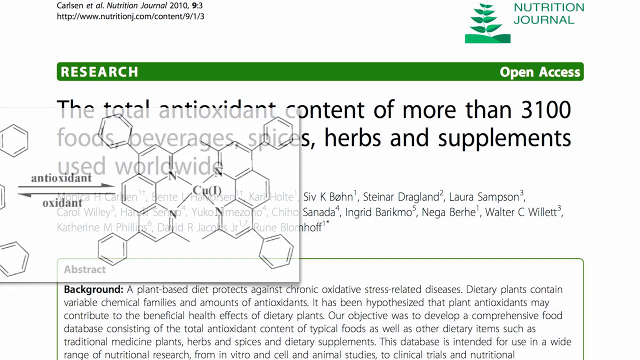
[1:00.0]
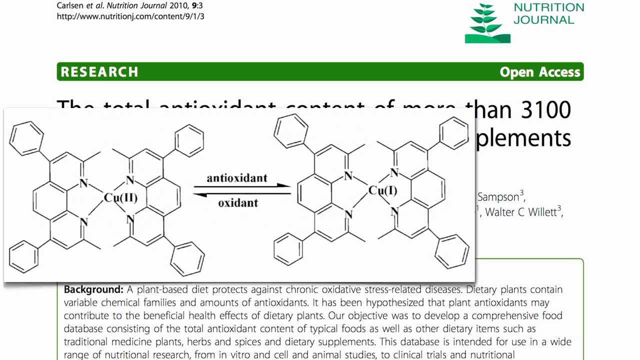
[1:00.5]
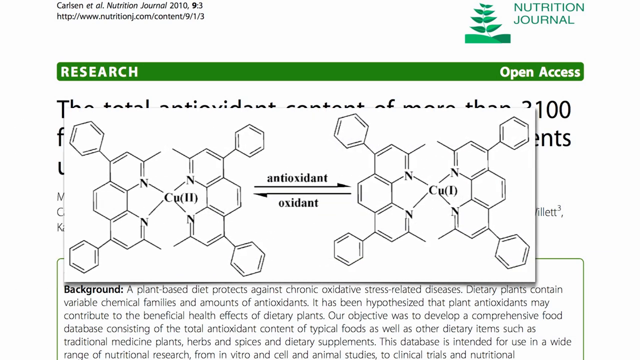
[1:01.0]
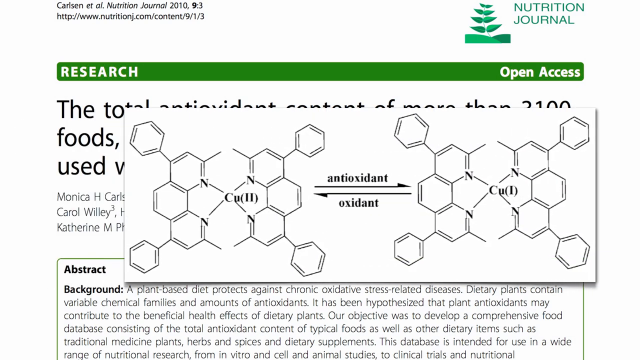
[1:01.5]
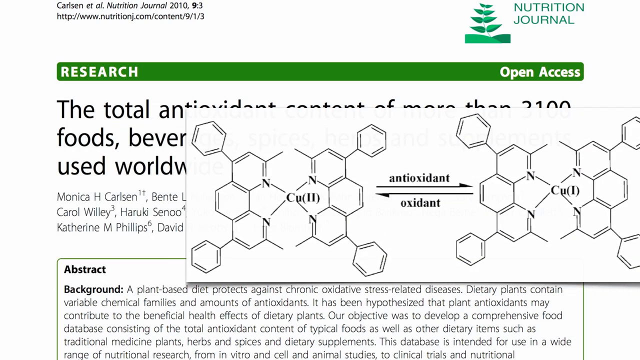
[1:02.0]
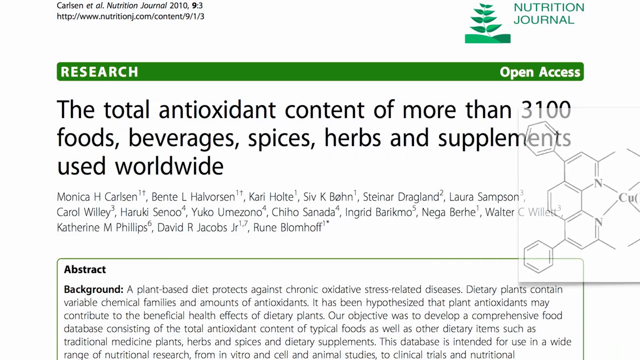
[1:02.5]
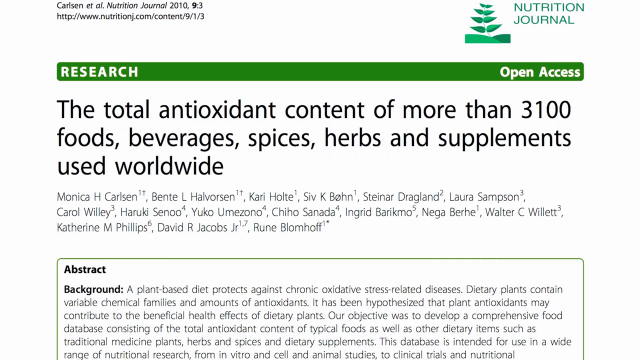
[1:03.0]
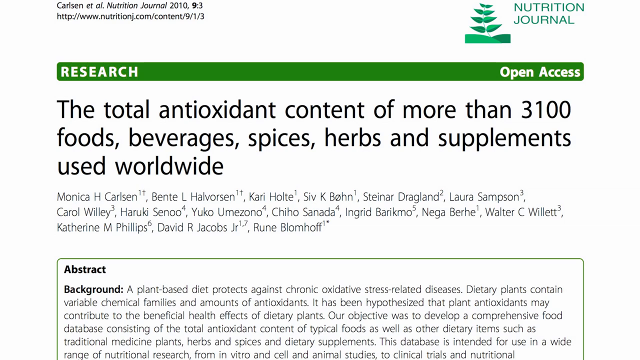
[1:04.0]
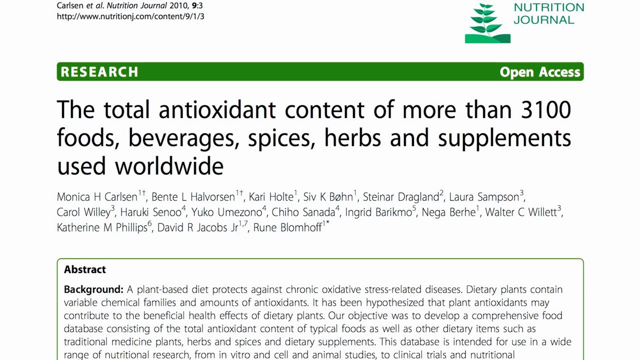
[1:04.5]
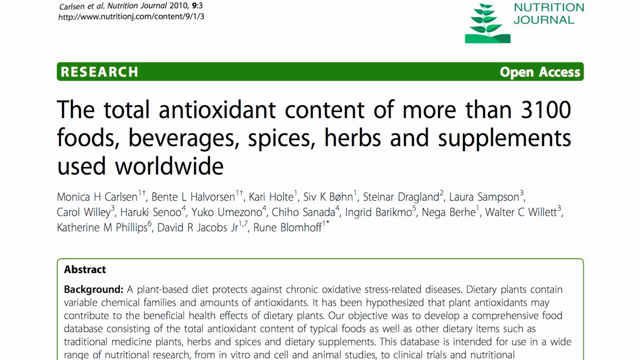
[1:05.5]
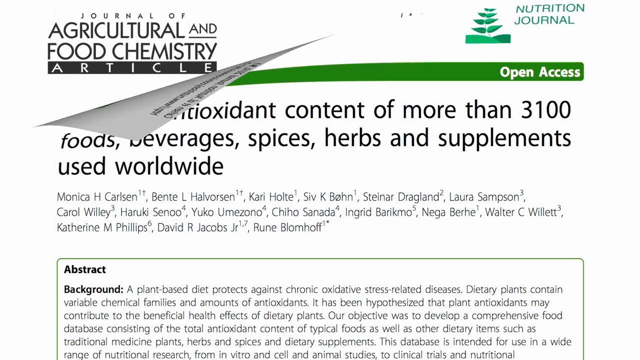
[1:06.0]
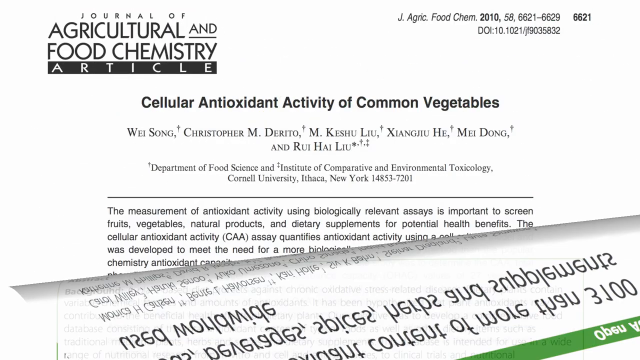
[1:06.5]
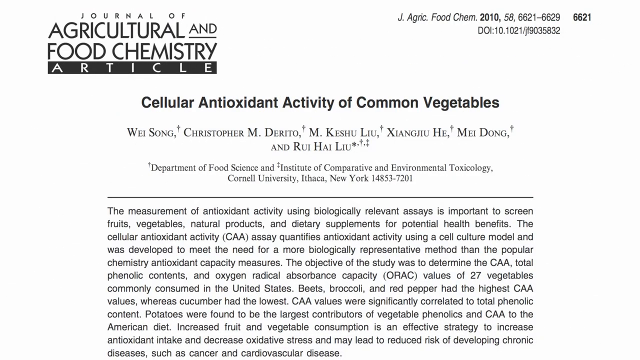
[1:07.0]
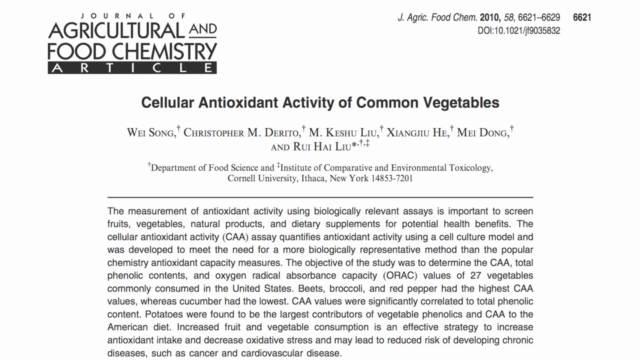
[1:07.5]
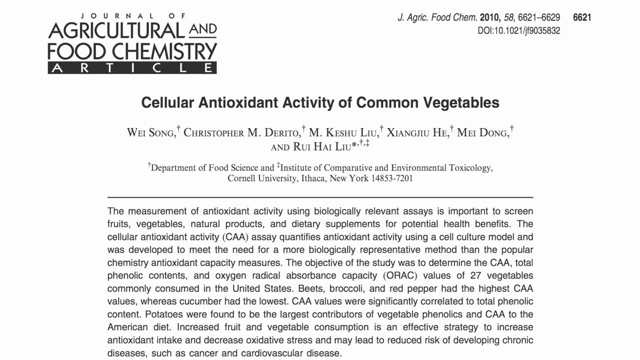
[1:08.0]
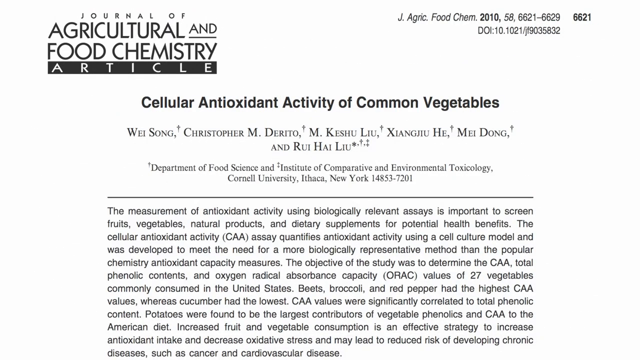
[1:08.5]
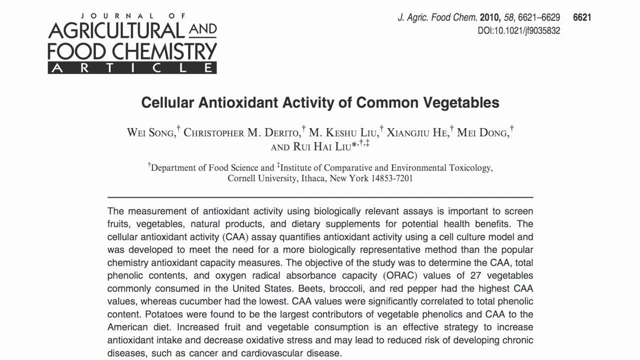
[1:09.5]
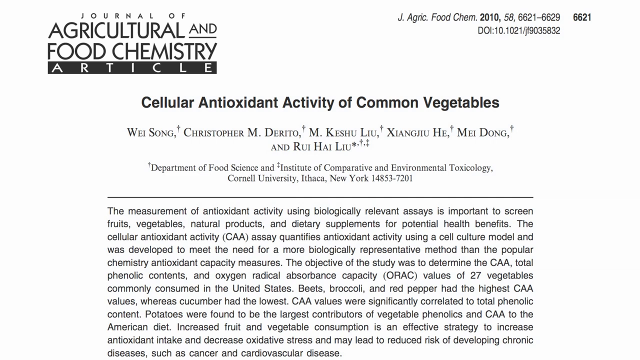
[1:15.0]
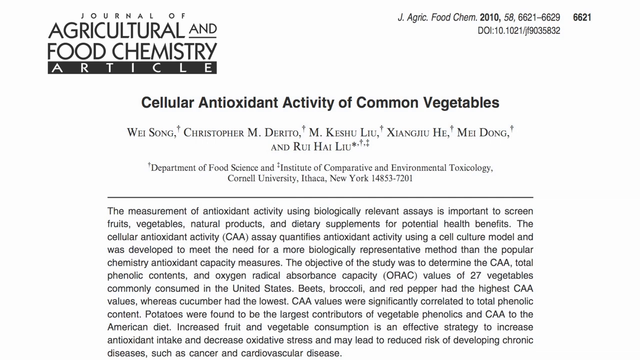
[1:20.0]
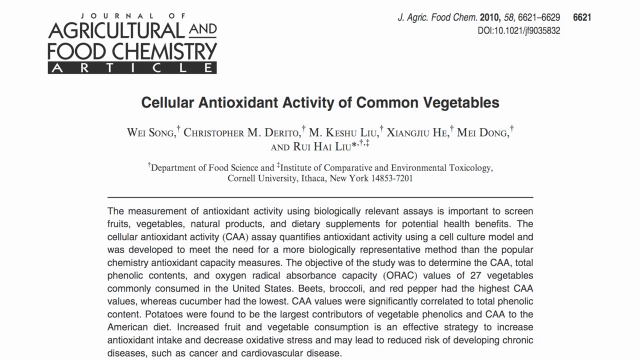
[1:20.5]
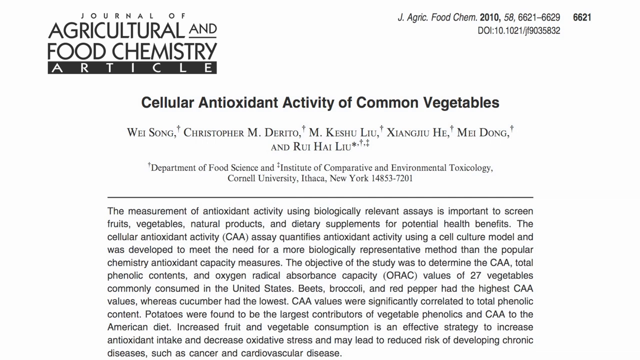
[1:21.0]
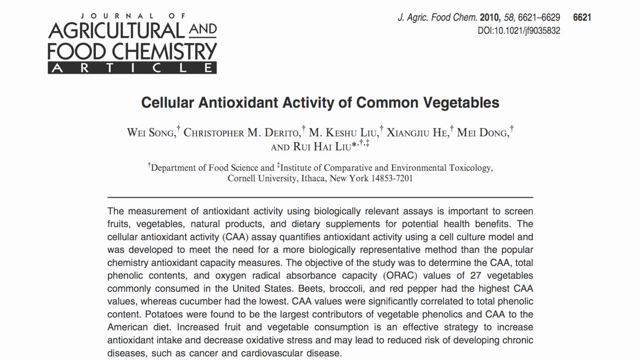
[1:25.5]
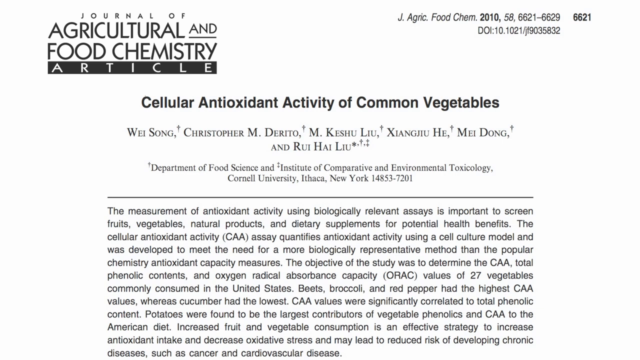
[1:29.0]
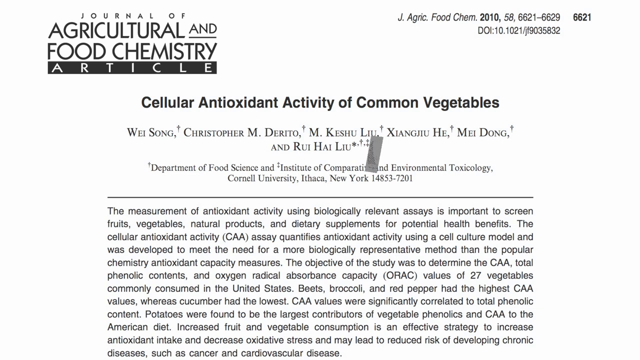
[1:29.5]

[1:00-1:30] A research article from Open Access, the nutrition journal, is shown. Almost honeycomb-shaped objects come across the screen, labeled with some N's and some "CU(11)"s. Between them, "antioxidant" appears with an arrow pointing right and "antioxidant" with an arrow pointing left. The objects come in from the left side of the screen and disappear to the right. The nutritional document peels away down to the bottom. An agriculture and food chemistry article on cellular antioxidant activity of common vegetables appears; at the very top it says who wrote the article, followed by a brief recap of the research. Only the top portion of the article is visible, and the bottom portion is cut off.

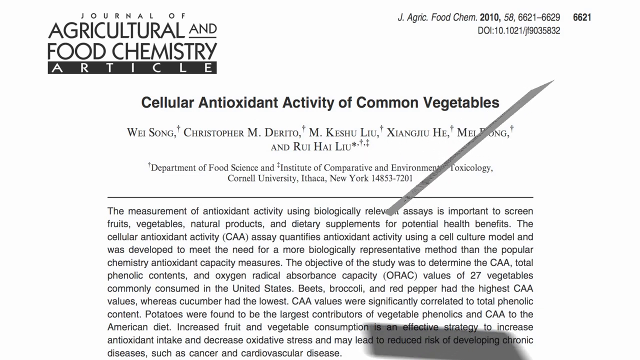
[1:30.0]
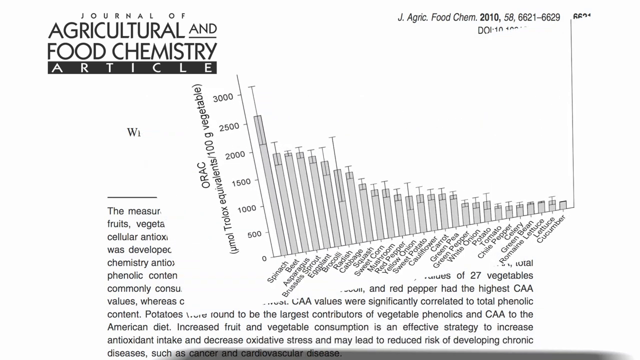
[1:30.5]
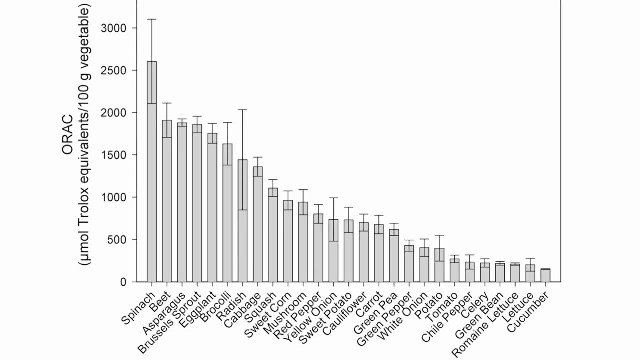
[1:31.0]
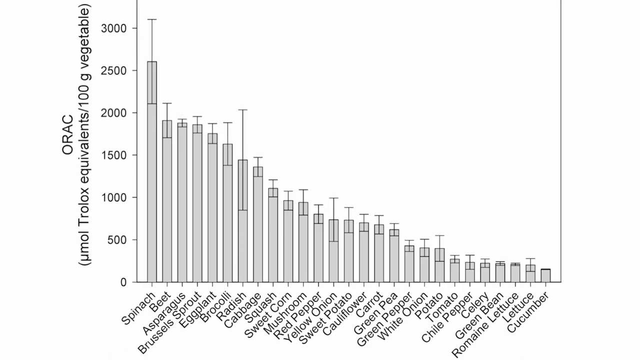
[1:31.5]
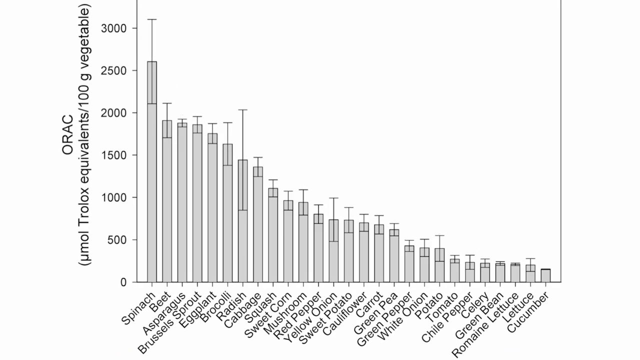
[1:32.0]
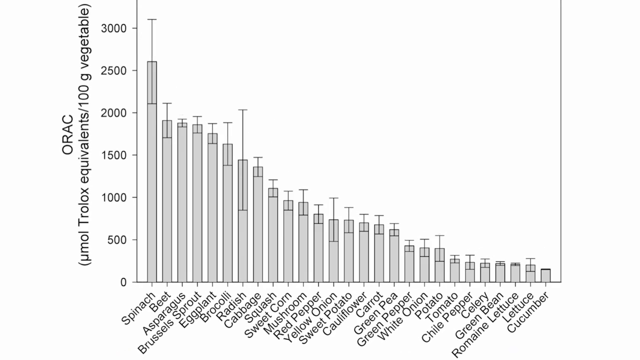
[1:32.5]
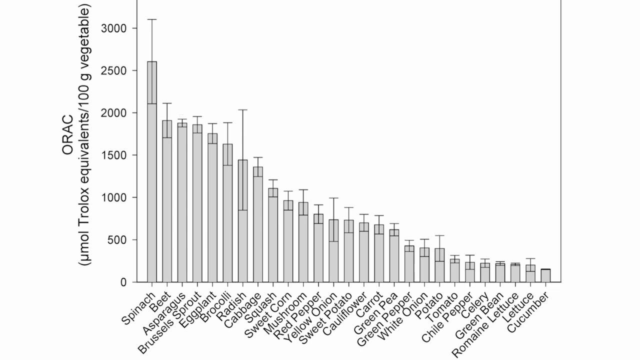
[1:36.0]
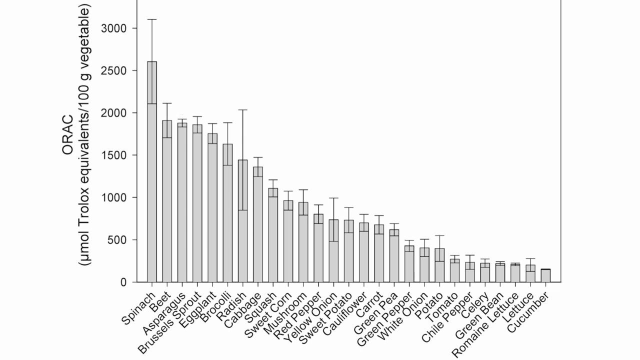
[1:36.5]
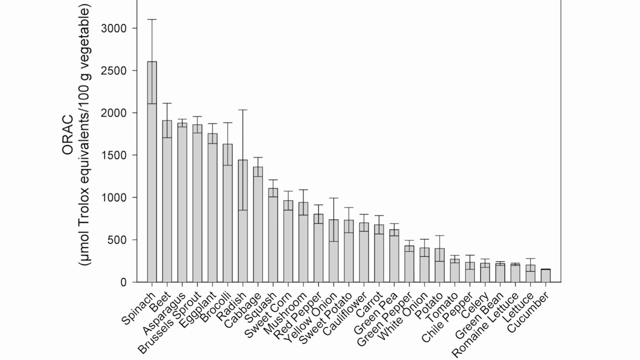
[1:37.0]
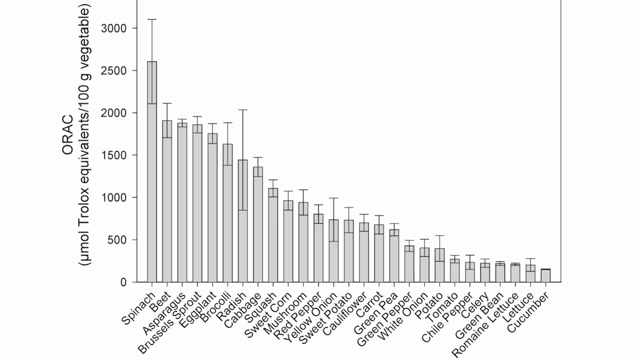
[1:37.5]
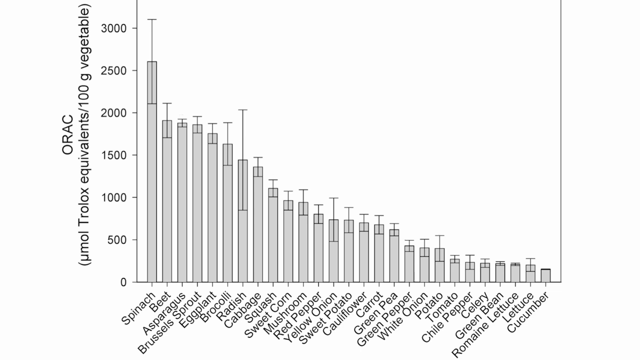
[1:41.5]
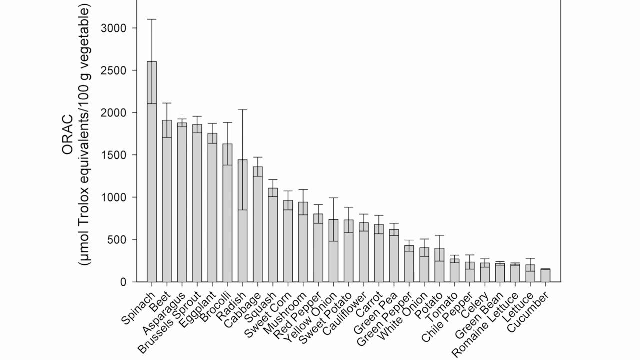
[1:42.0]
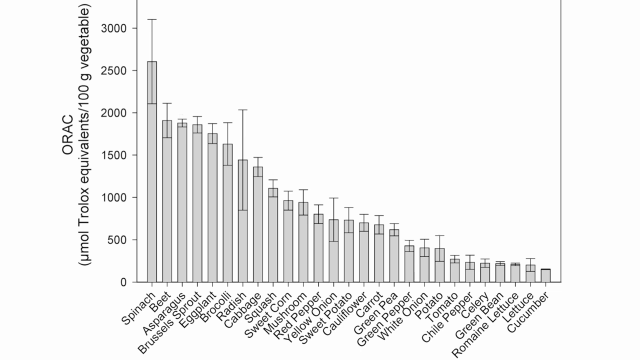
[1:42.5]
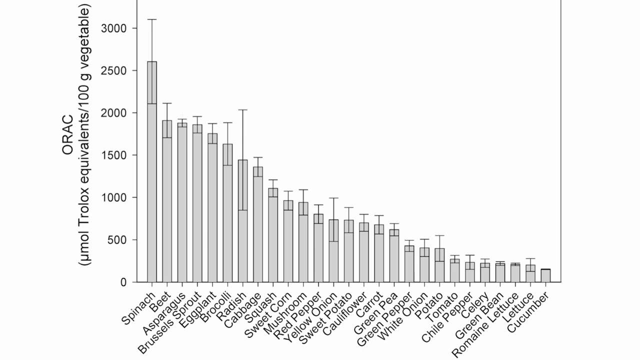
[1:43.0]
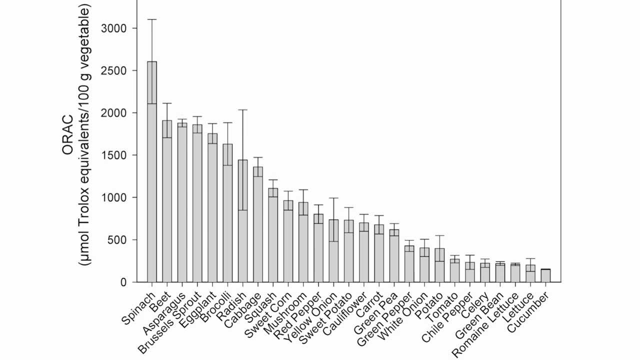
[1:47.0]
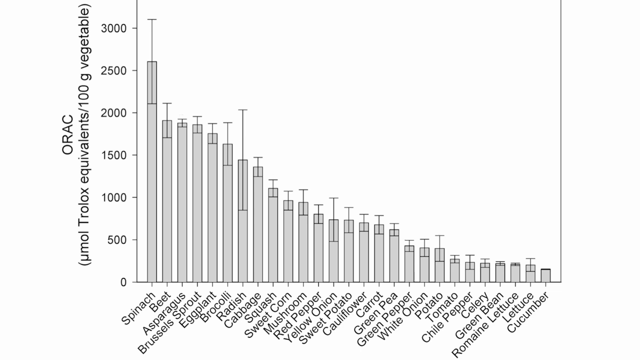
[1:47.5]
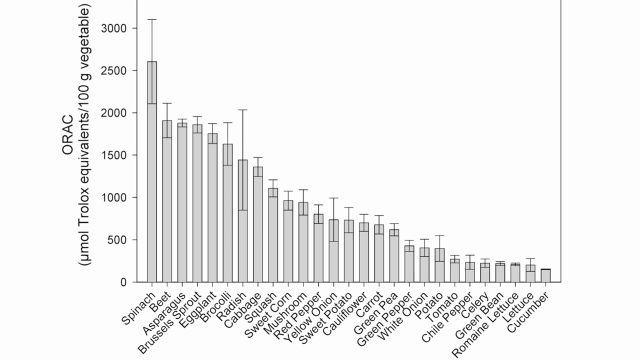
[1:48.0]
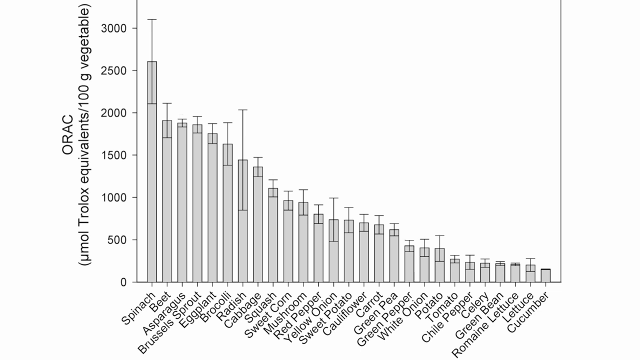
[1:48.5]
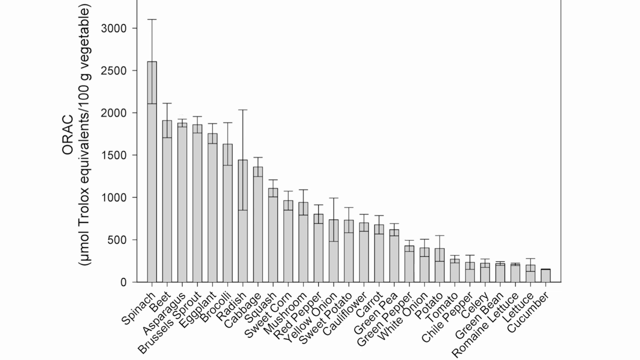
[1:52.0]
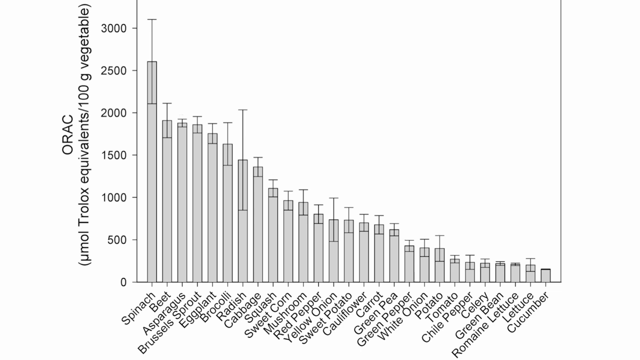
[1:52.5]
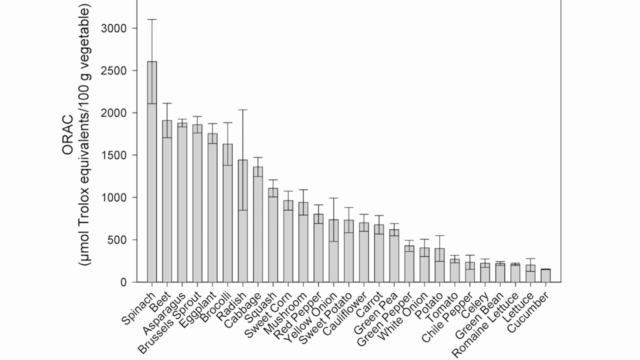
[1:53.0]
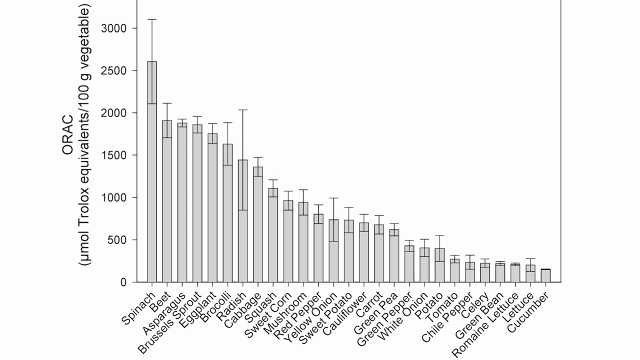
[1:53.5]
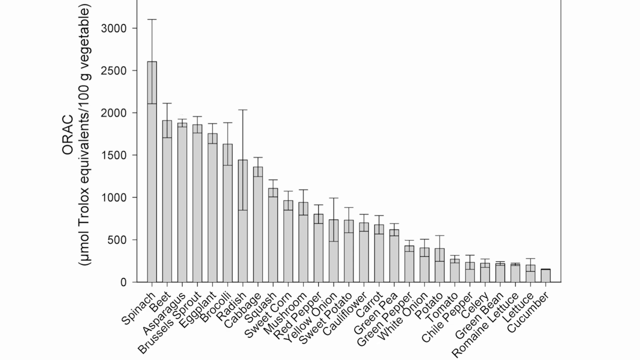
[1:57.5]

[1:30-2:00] First a research article appears, then a black and white bar graph. "ORAC" is on the side of the graph, and the bottom lists many vegetables, beginning with spinach and ending with cucumber. At the top of the bars is a little pin with a flat top, though not all bars have one; apparently the green bean, the cucumber and the romaine lettuce do not. A black and white article from Agricultural and Food Chemistry says "cellular antioxidant activity of common vegetables", which is what the graph measures for each of the vegetables listed at its bottom. Both the article and the graph are black and white.